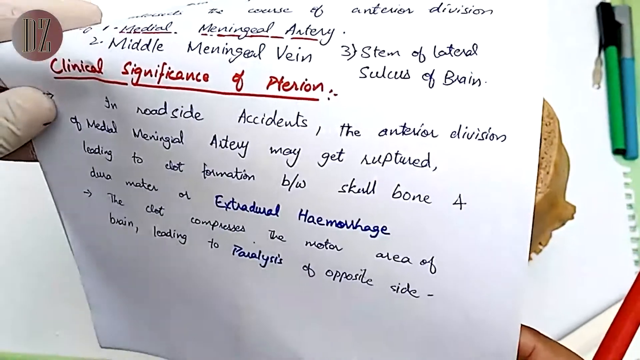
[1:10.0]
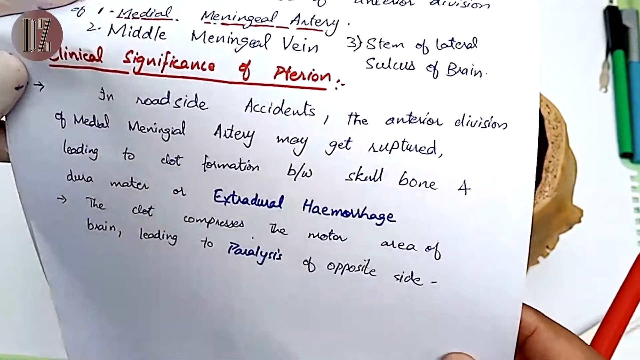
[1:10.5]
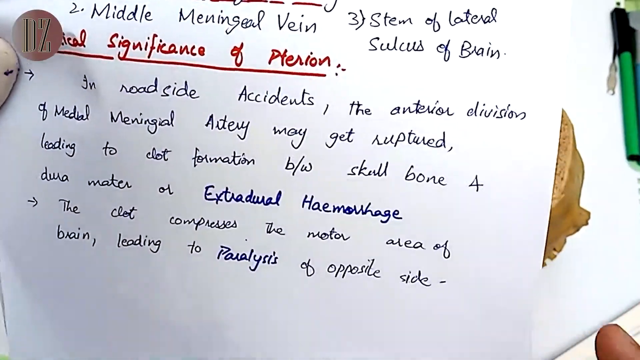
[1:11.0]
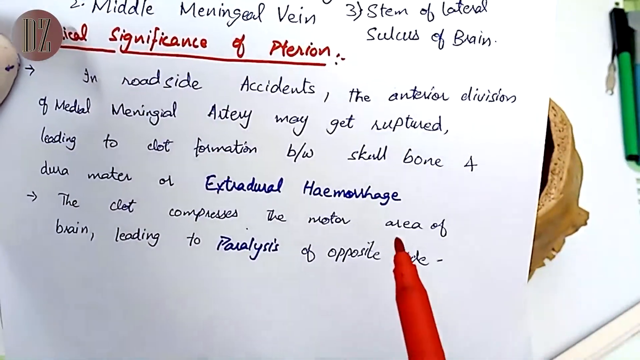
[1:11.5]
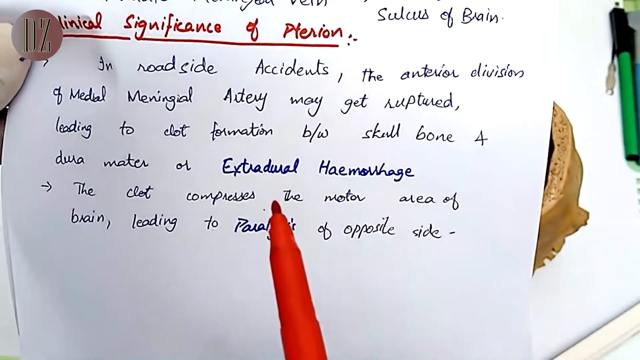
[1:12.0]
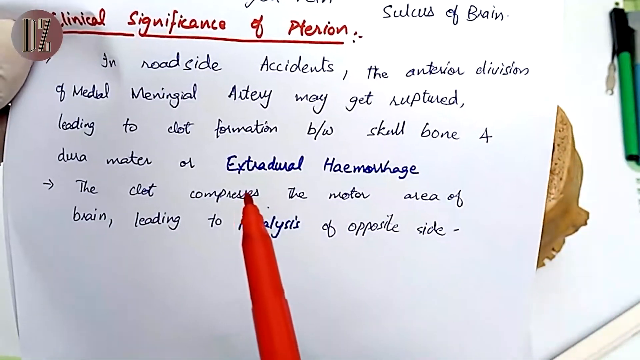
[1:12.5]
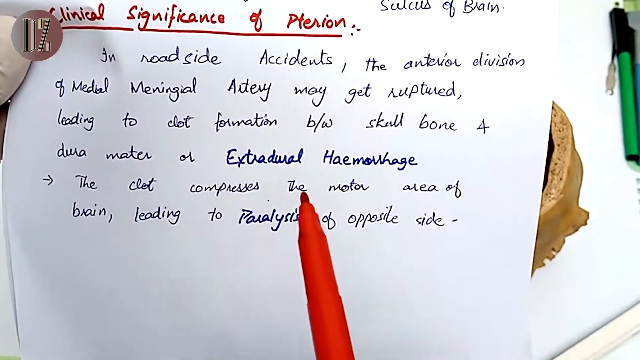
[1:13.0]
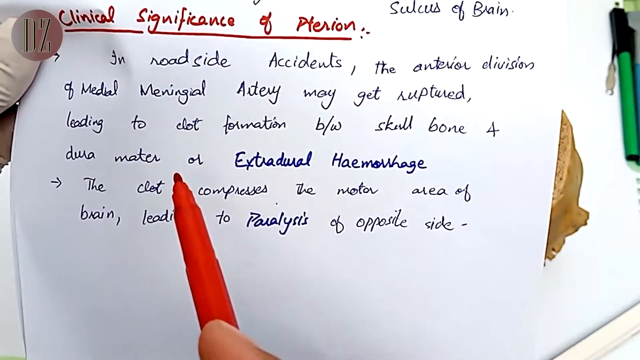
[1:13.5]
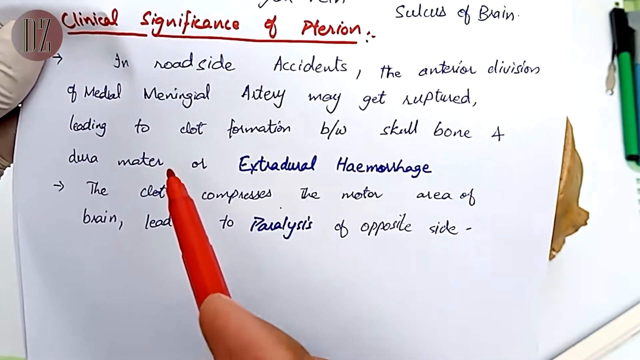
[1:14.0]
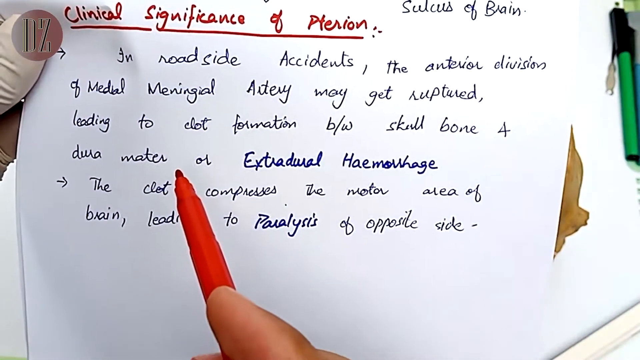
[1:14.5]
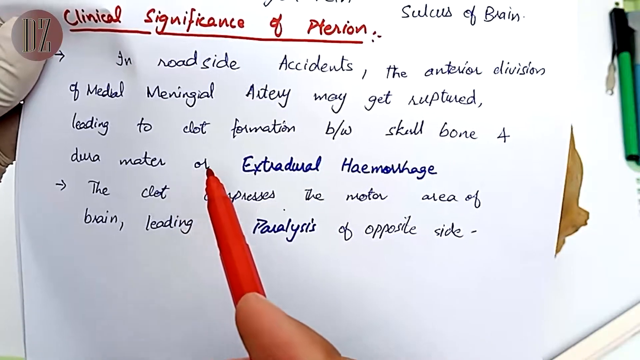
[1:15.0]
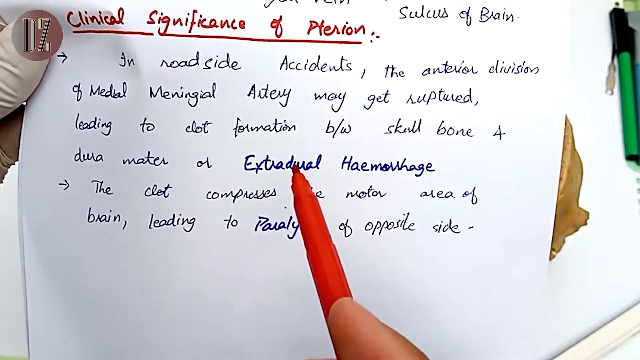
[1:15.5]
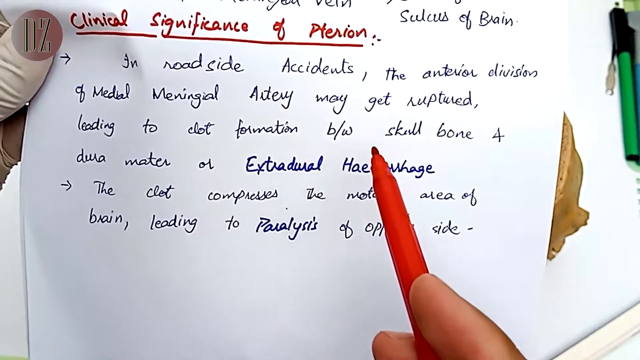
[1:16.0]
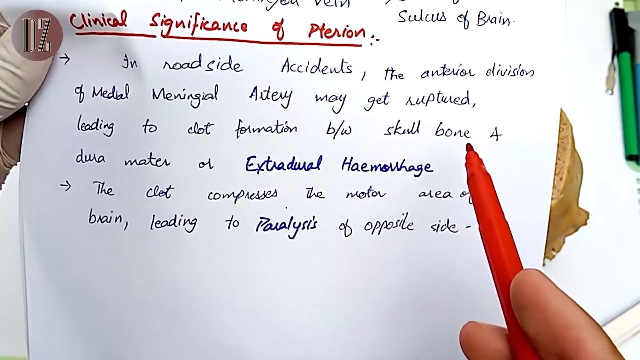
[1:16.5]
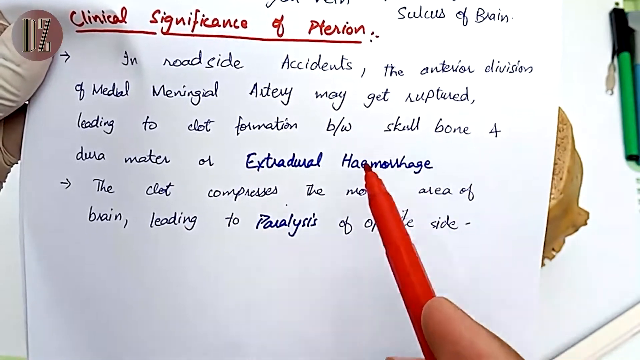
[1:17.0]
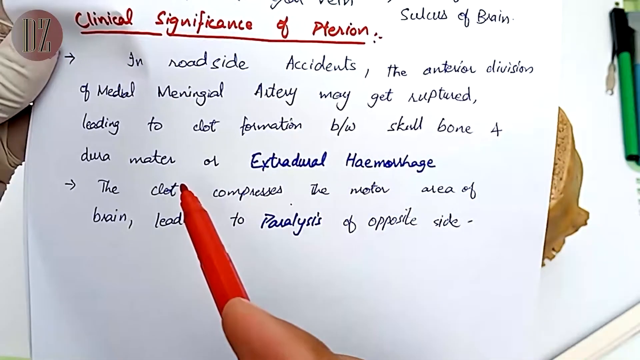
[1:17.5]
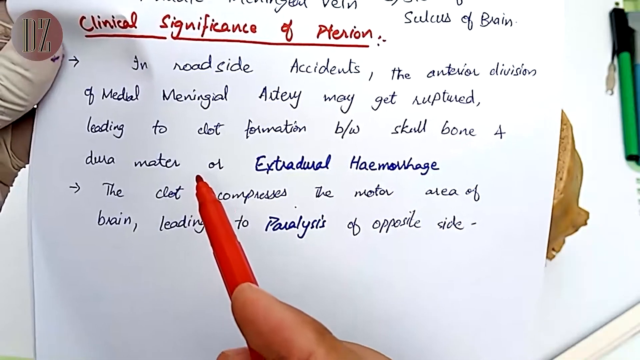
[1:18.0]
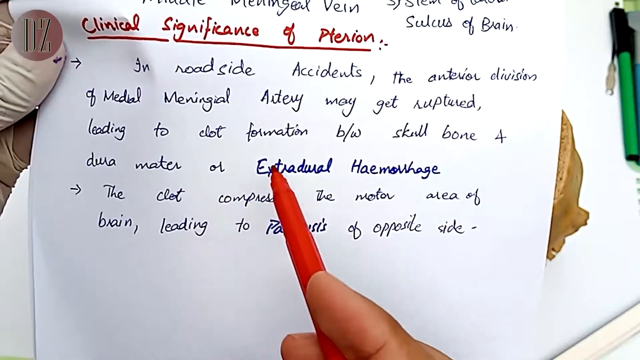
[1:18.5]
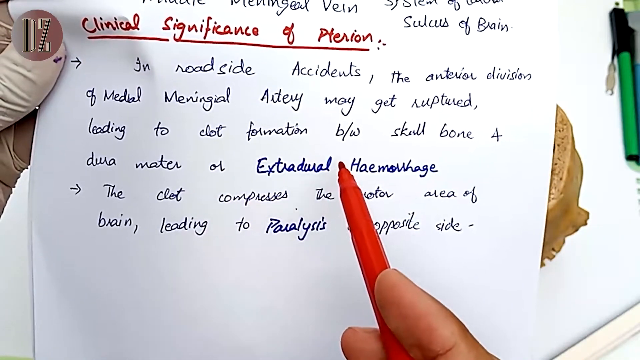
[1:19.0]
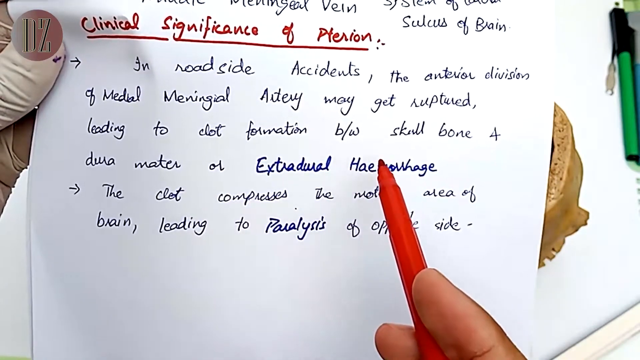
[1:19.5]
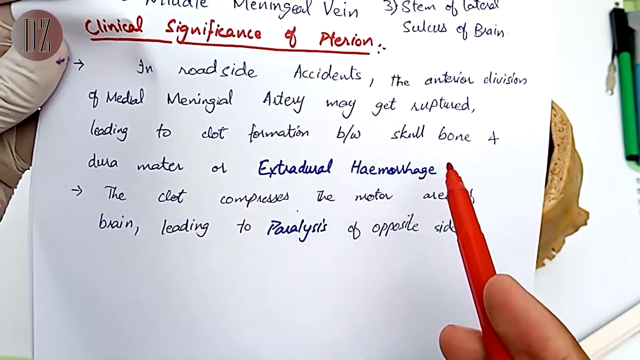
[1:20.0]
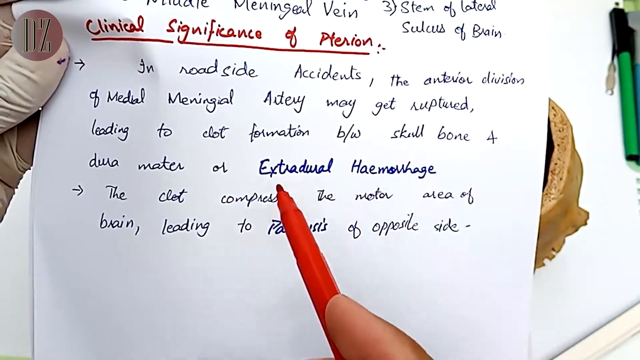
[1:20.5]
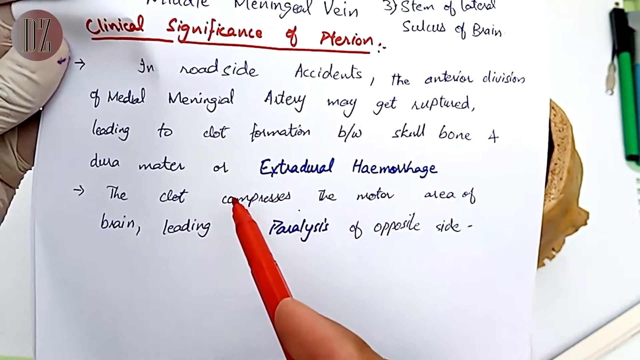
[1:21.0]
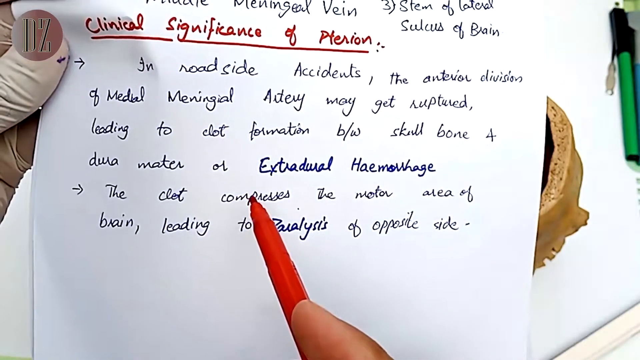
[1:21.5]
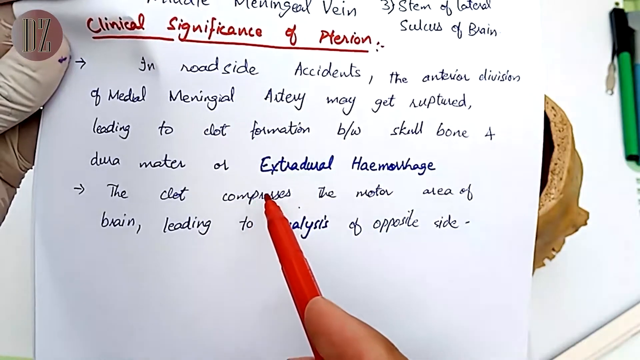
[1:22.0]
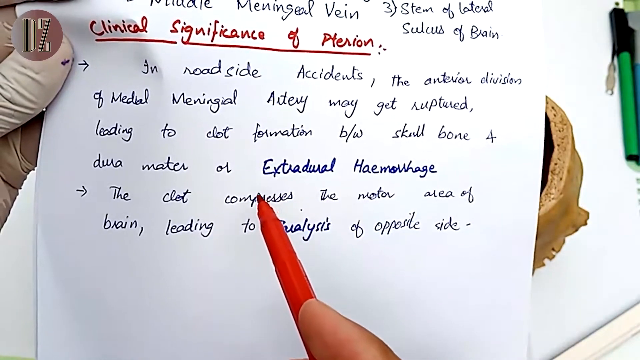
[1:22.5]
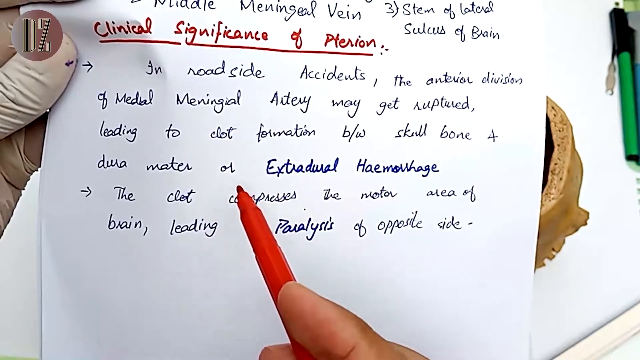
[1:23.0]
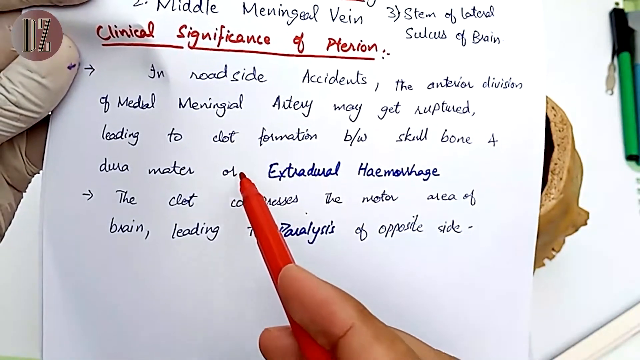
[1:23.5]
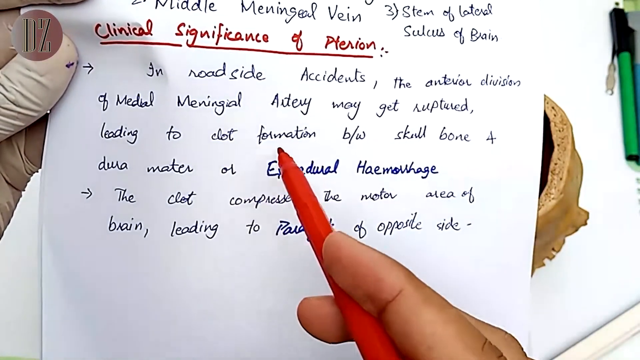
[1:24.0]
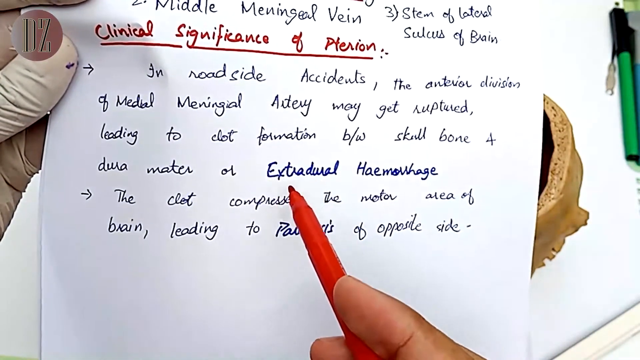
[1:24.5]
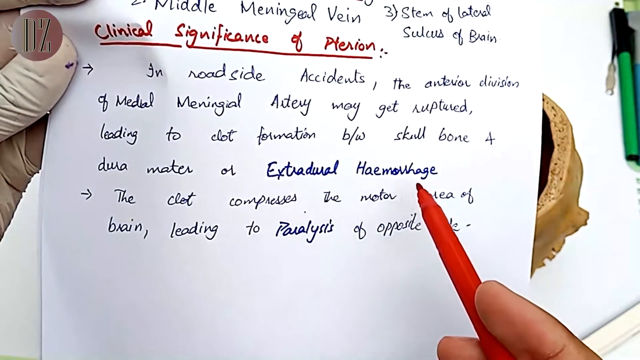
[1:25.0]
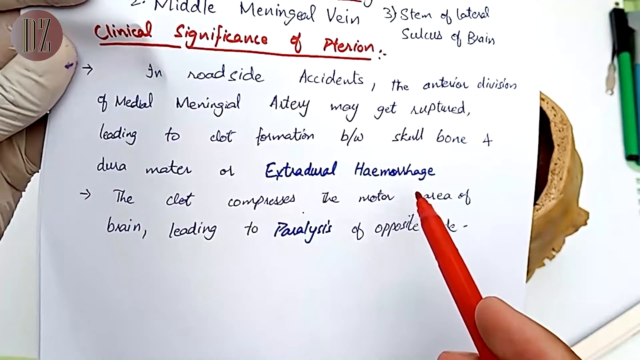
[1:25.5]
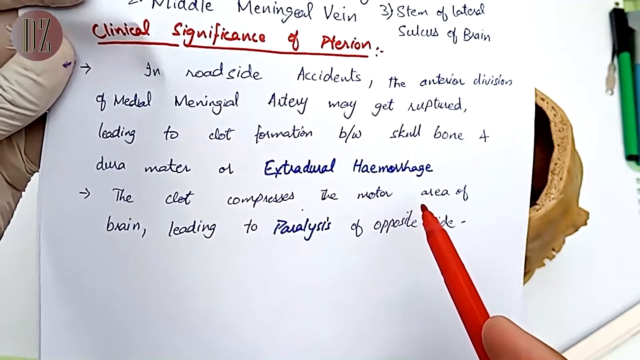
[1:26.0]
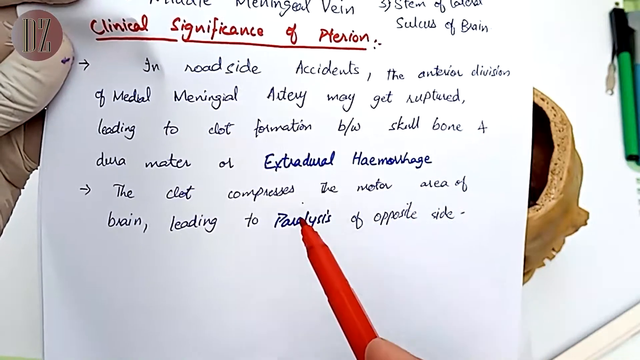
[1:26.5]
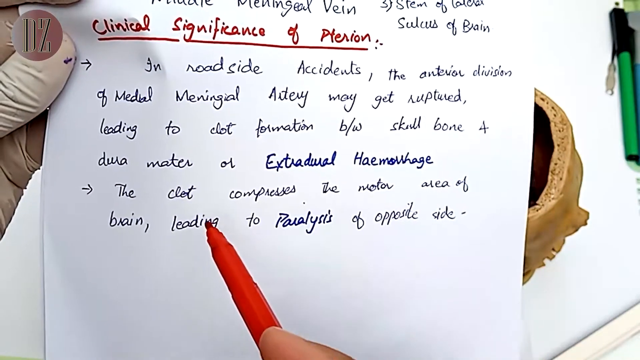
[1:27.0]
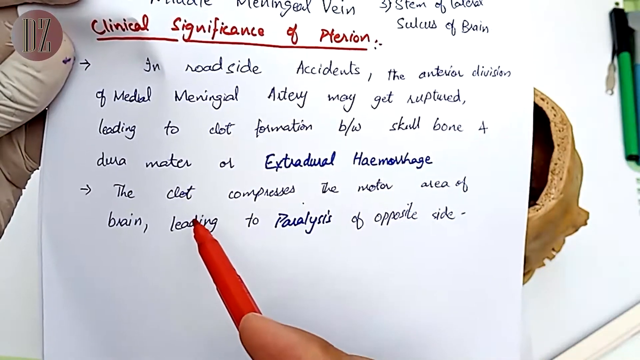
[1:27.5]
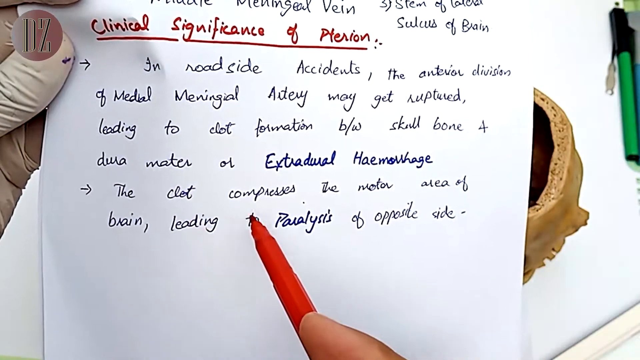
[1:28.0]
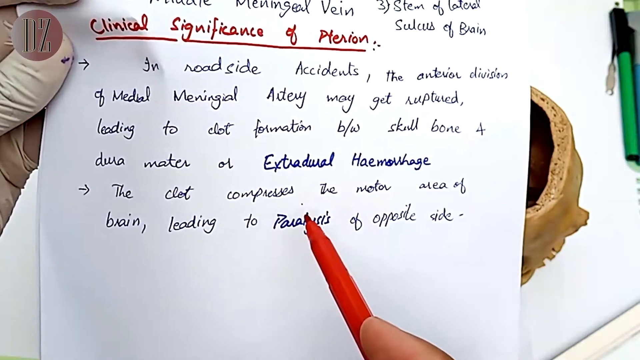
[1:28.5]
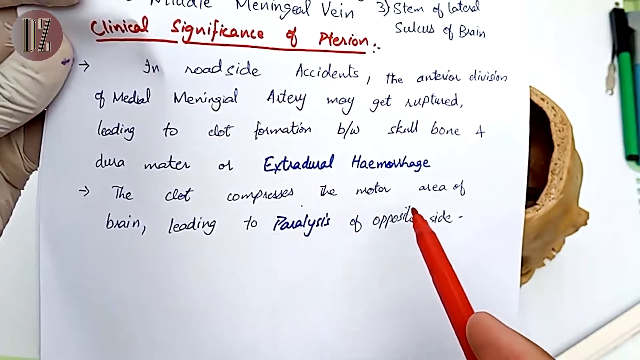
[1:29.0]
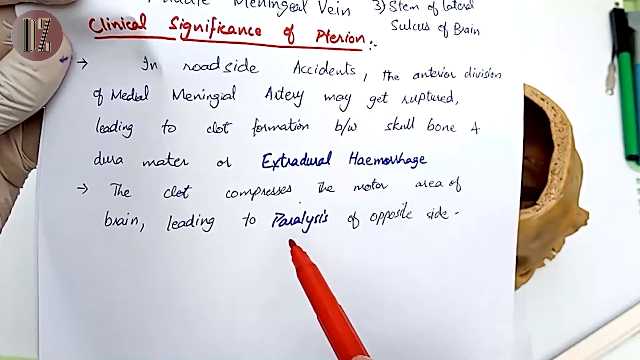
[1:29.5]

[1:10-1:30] A close-up shows a piece of white paper with no lines, with text written in black, red marker and blue marker. It is held in a person's left hand, which wears a surgical glove. "Clinical Significance of Pterion" is written in red marker and underlined in red. The blue writing appears to be the words "extradural hemorrhage". The person moves the red marker in their right hand across the page over certain words as if reading them. There is a desk below, with a large sheet of white paper that has been ripped out of a spiral binder, and two pens side by side: one green with a black cap, the other blue with a gray cap.